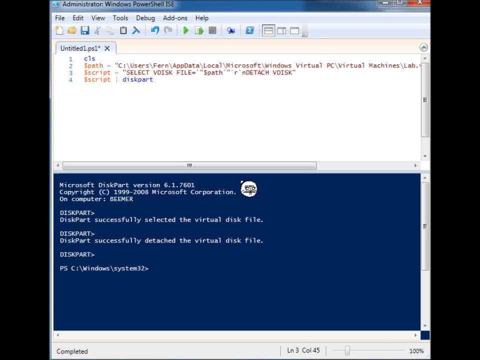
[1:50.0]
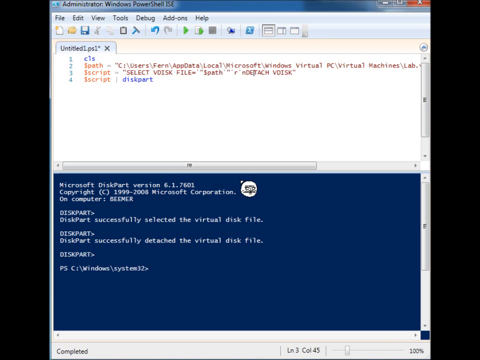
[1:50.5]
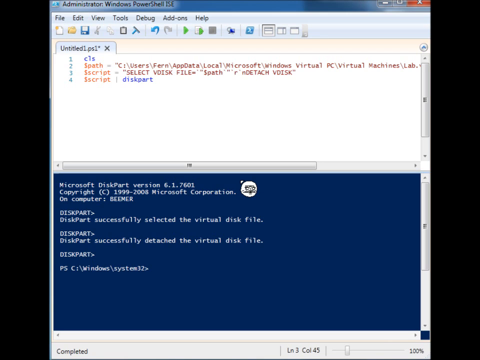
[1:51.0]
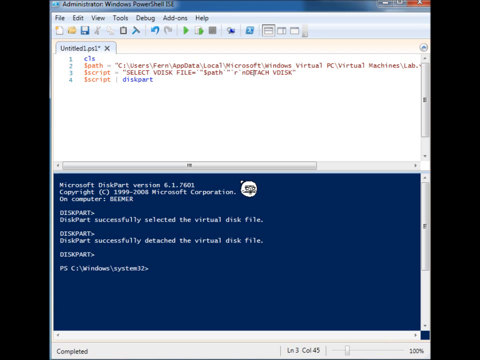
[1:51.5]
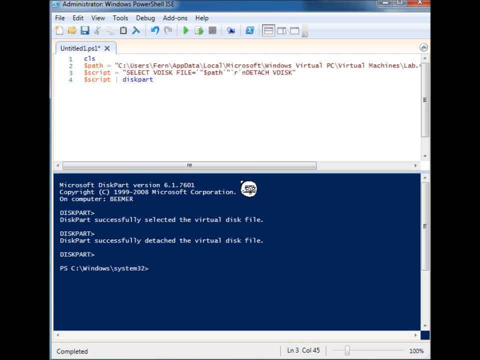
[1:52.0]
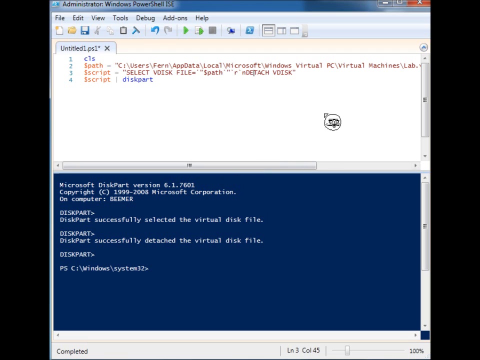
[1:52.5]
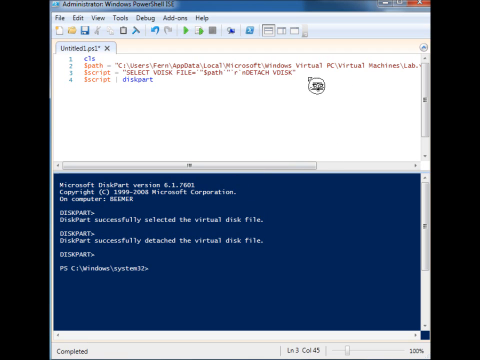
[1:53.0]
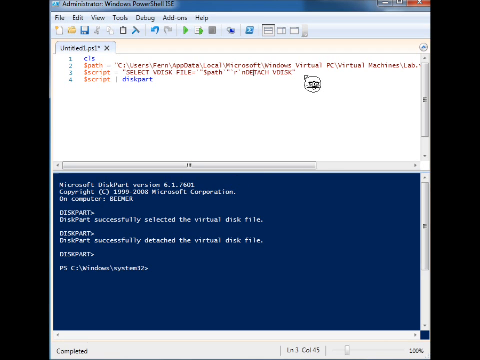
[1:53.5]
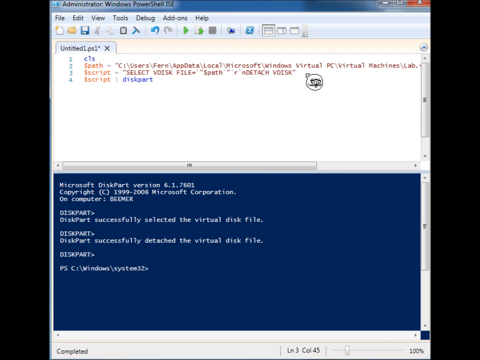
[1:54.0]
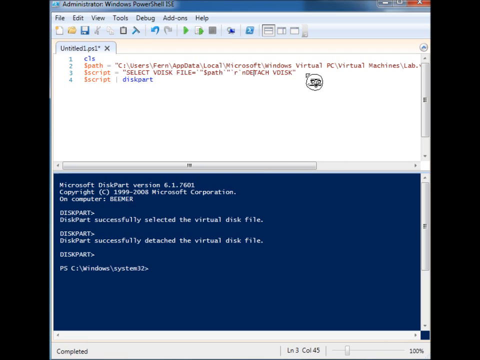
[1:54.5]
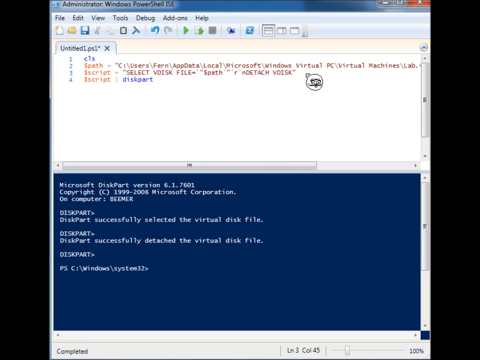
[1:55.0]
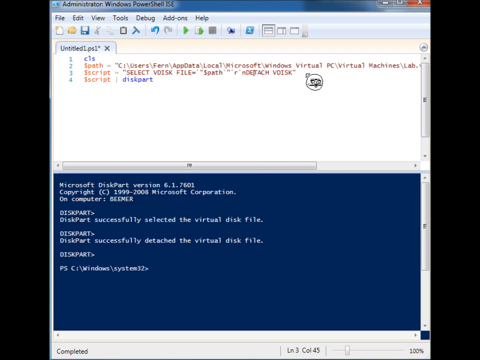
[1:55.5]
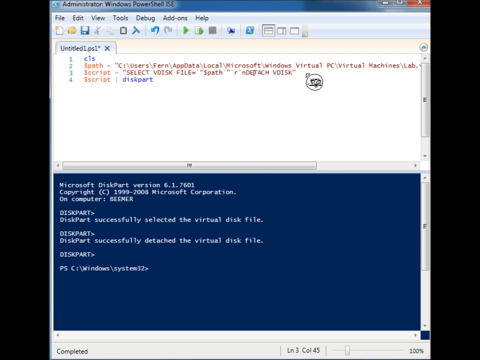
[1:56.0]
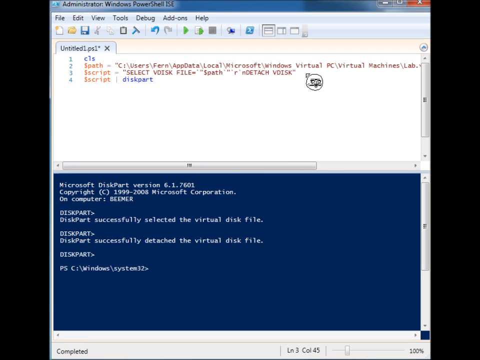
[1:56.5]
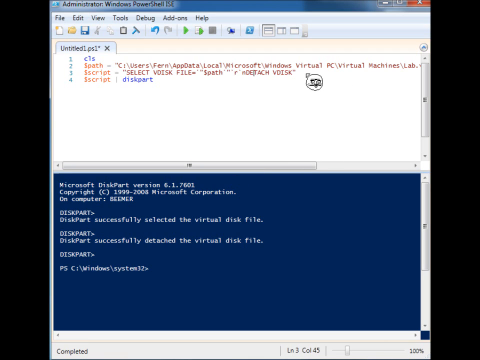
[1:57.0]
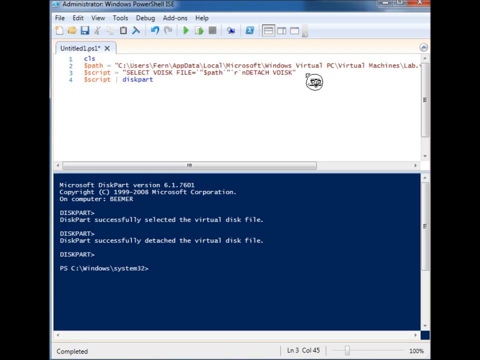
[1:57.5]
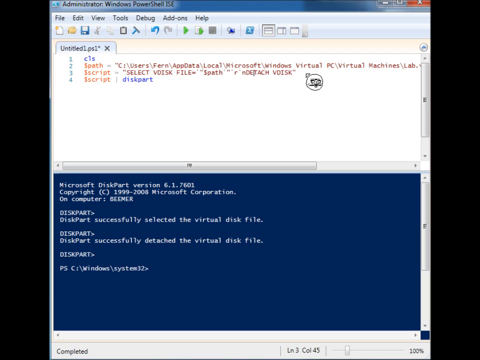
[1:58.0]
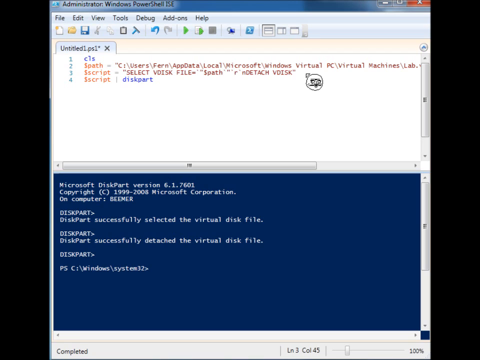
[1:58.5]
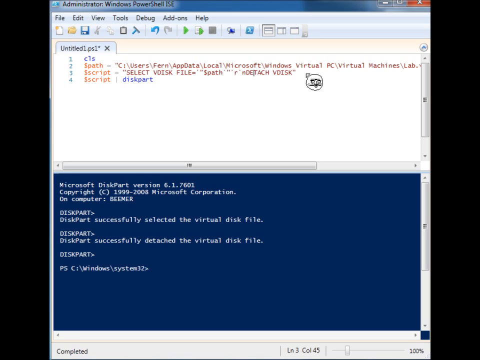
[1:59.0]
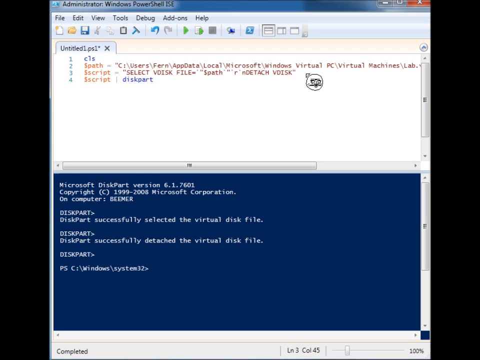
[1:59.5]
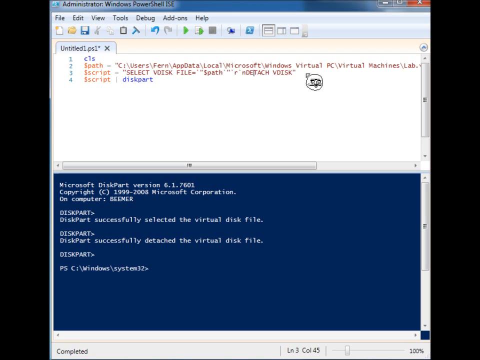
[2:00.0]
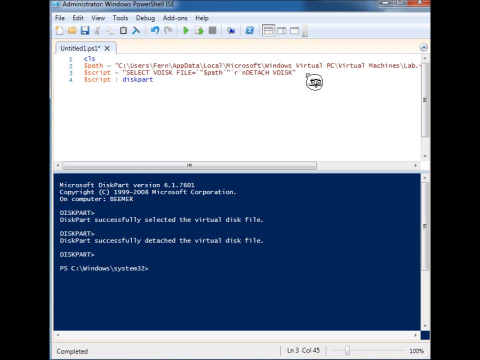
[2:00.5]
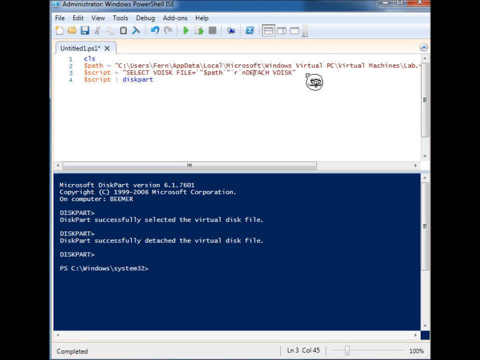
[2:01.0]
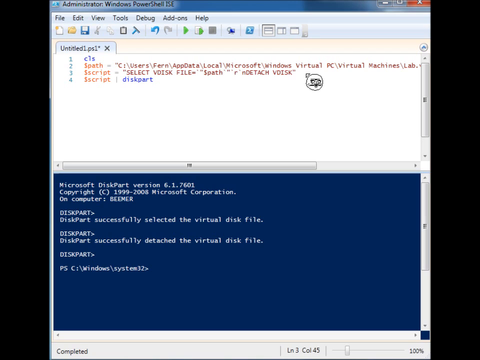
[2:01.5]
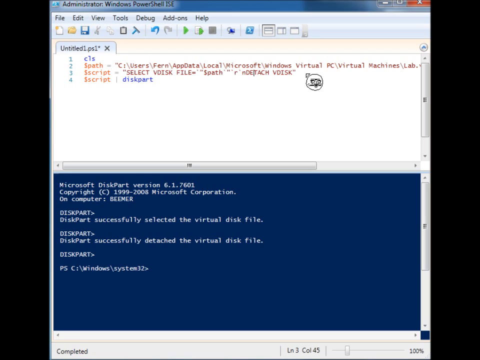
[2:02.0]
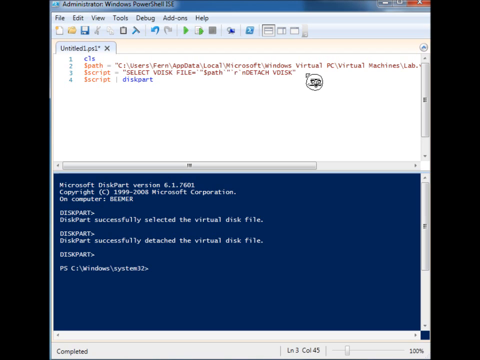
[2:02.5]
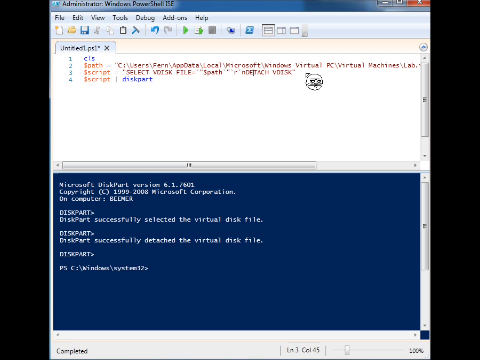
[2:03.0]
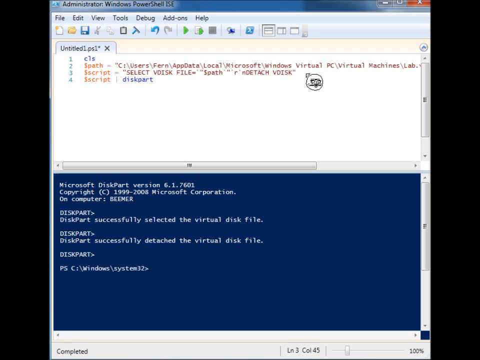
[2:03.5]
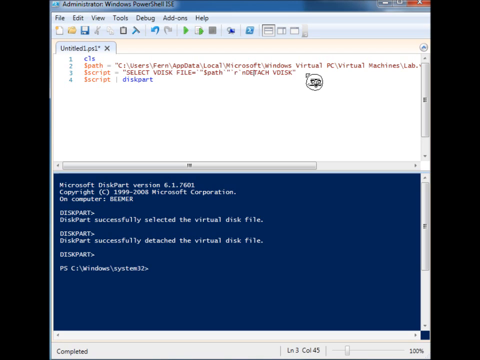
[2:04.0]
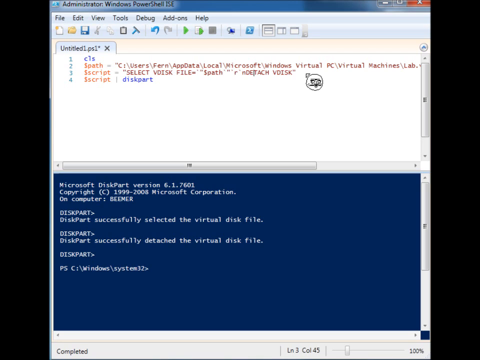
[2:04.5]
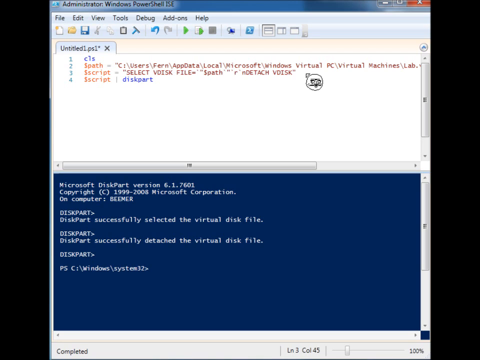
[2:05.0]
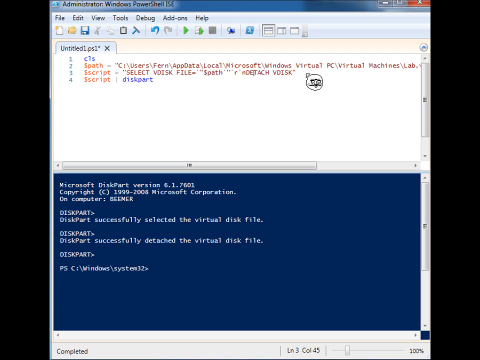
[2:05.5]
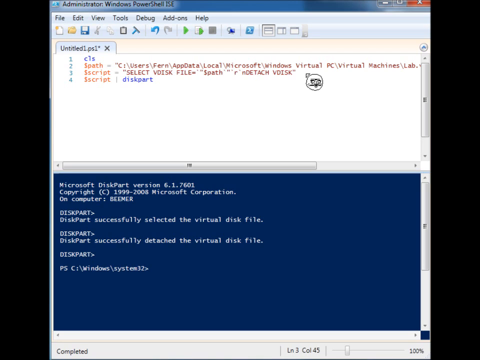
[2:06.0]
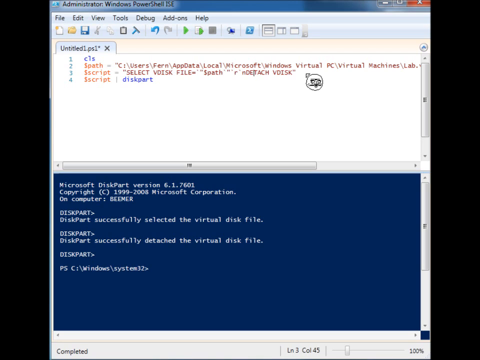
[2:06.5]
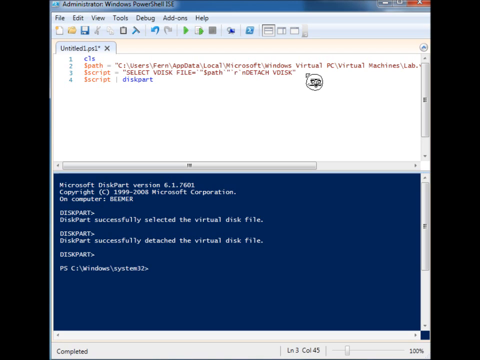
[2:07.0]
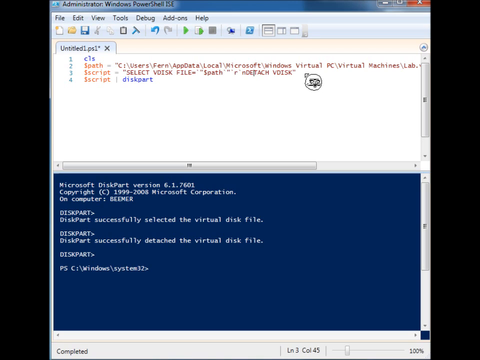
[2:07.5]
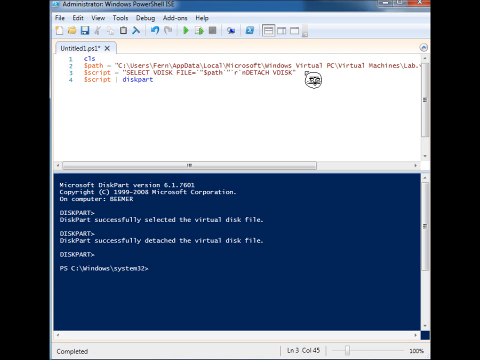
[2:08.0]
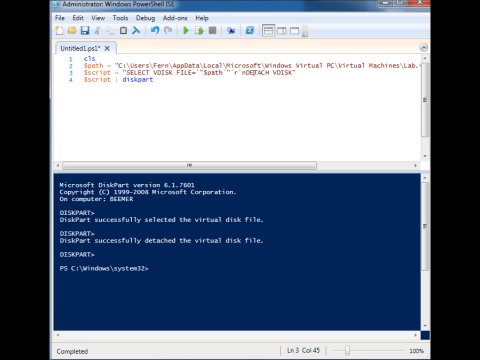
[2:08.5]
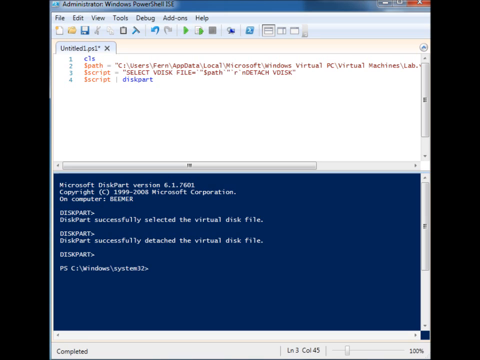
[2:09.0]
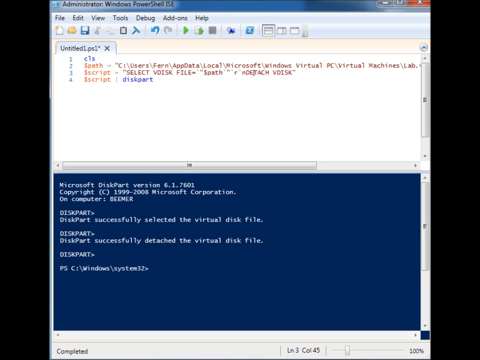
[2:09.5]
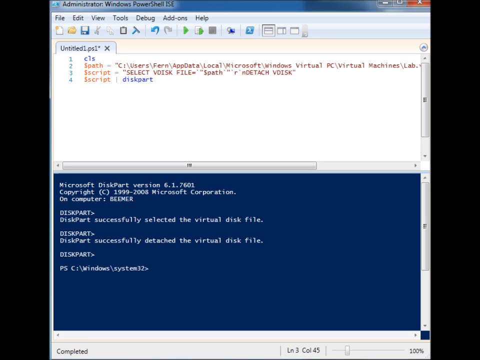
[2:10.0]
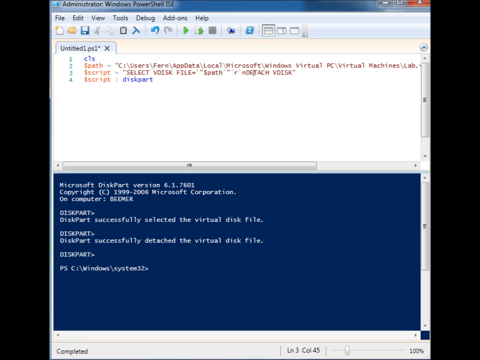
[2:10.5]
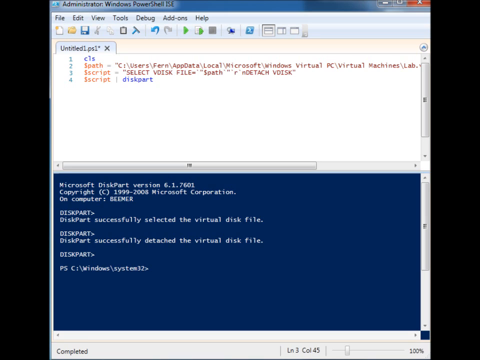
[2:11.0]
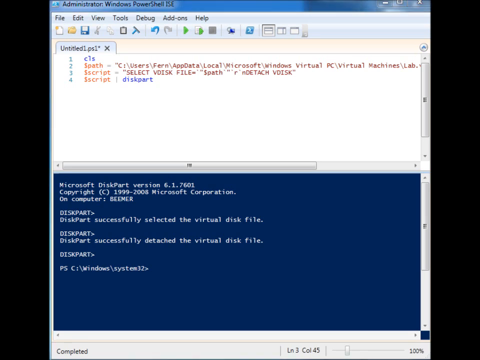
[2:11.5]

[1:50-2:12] The administrator Windows PowerShell ISE window remains open, its top half showing the word attach changed to detach. In the lower half, the dark blue command line interface with white lettering acknowledges that DiskPart successfully selected the virtual disk and successfully detached the virtual disk file. The mouse moves the cursor off the screen to the right. The terminal indicates the program is Microsoft Disk Partition version 6.1.7601, copyright 1999-2003 or 2005 Microsoft Corporation, on computer Beamer, apparently the computer's name. After the virtual disk is detached, there is little to no activity on screen, and the video comes to an end.